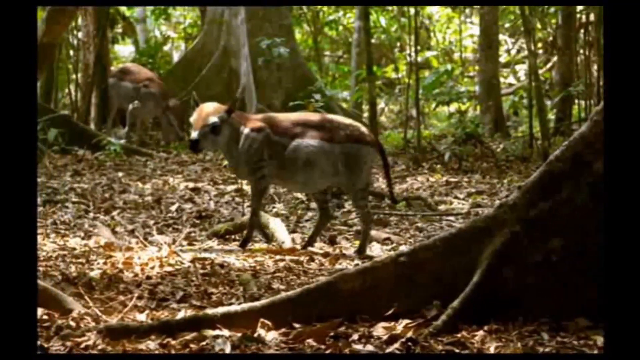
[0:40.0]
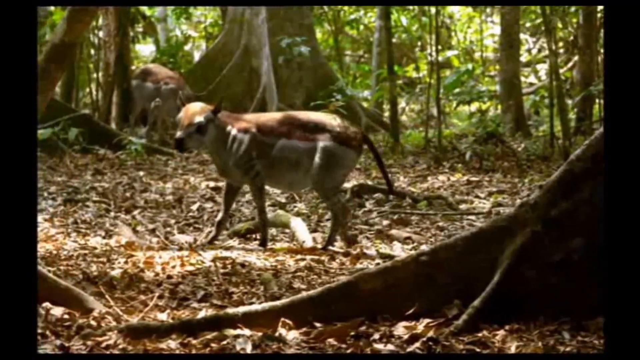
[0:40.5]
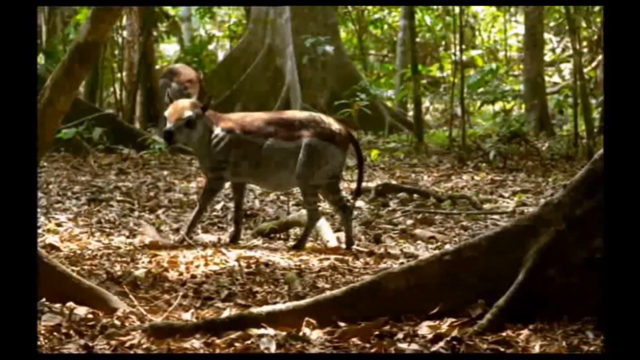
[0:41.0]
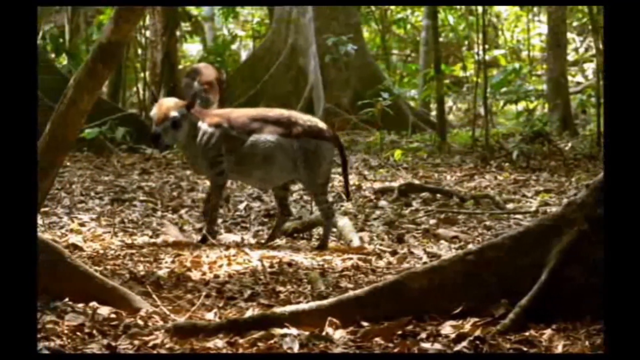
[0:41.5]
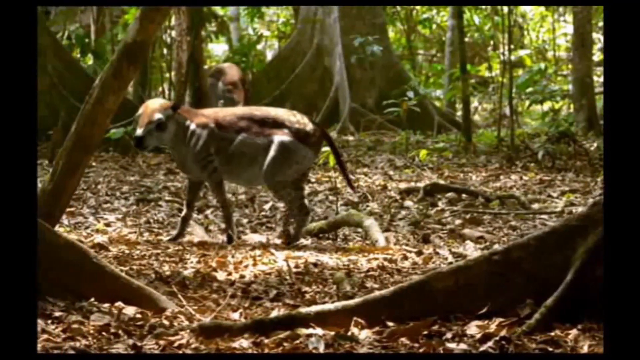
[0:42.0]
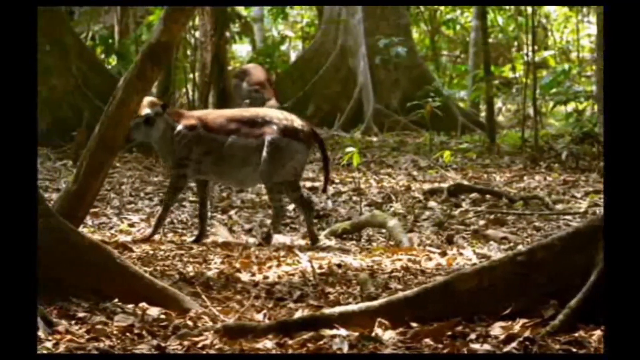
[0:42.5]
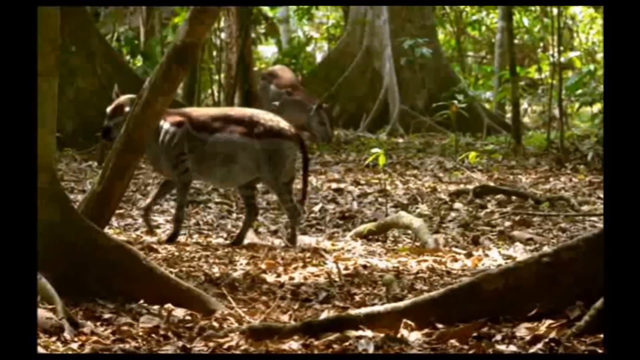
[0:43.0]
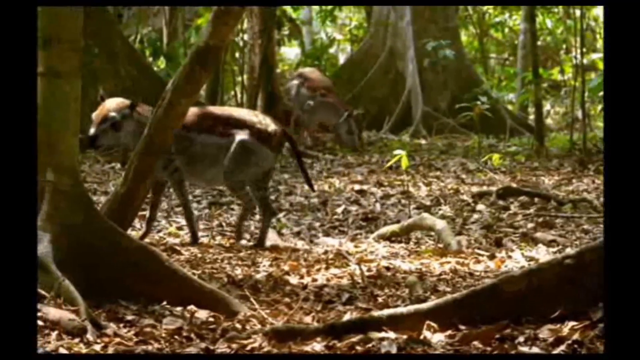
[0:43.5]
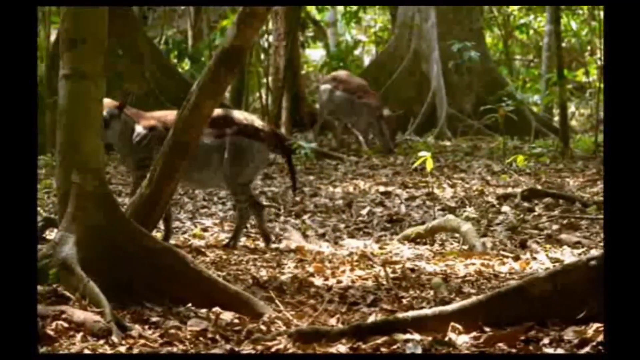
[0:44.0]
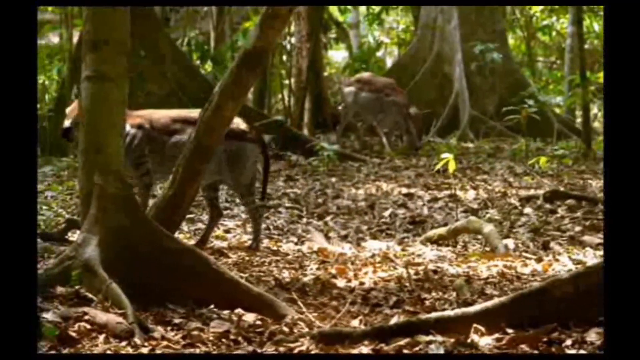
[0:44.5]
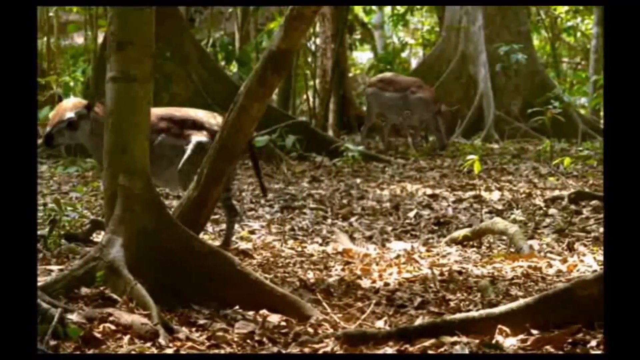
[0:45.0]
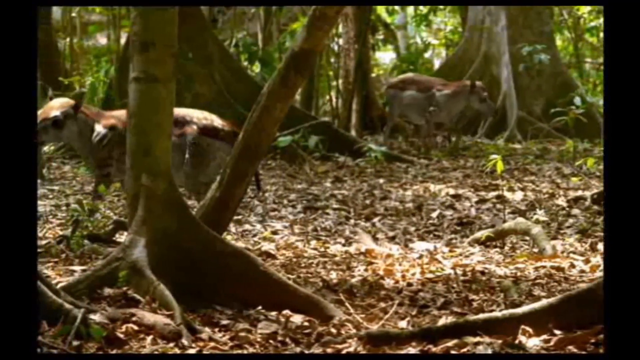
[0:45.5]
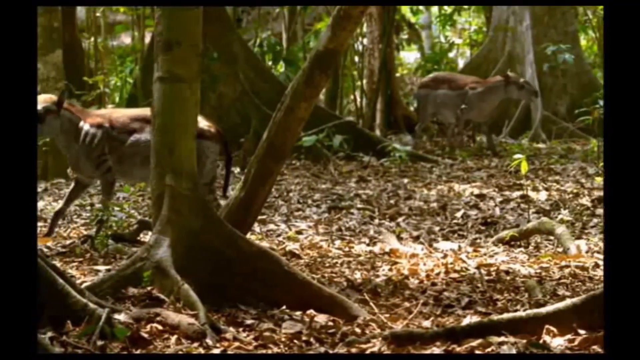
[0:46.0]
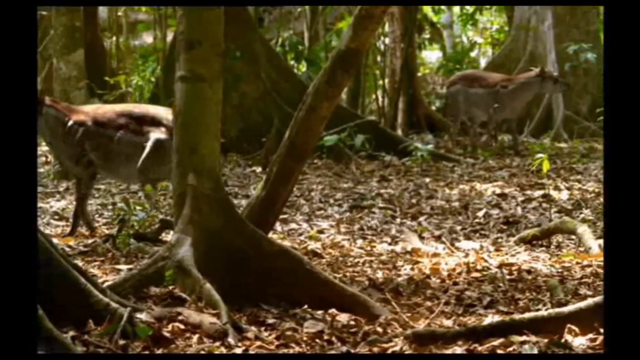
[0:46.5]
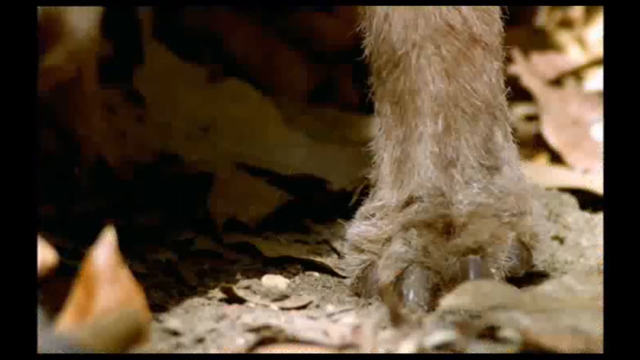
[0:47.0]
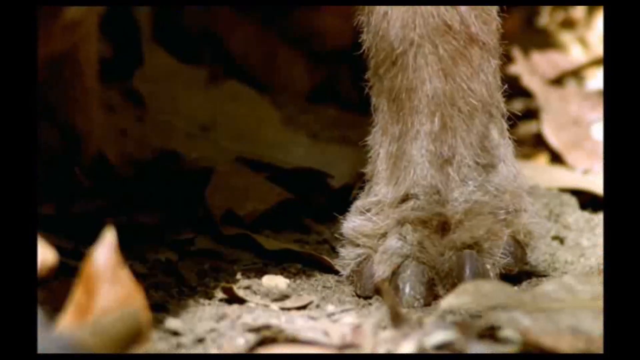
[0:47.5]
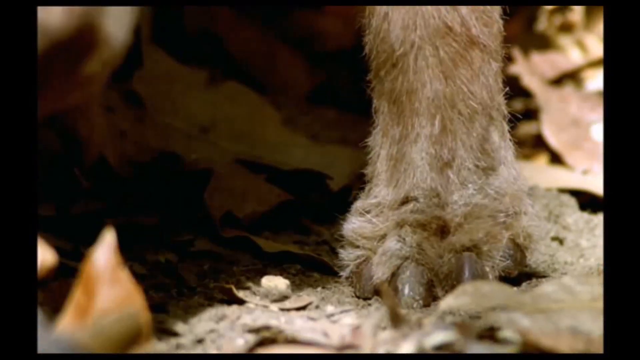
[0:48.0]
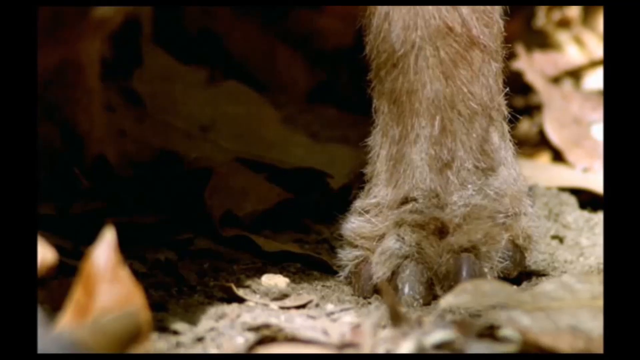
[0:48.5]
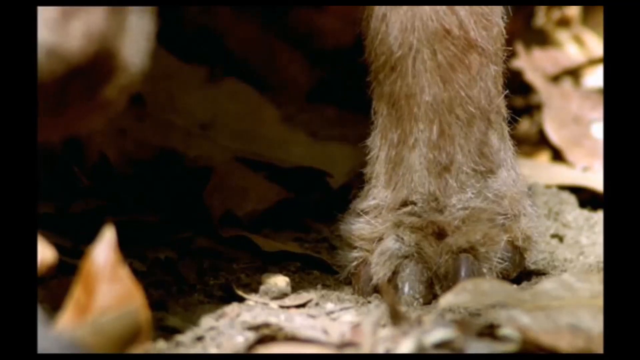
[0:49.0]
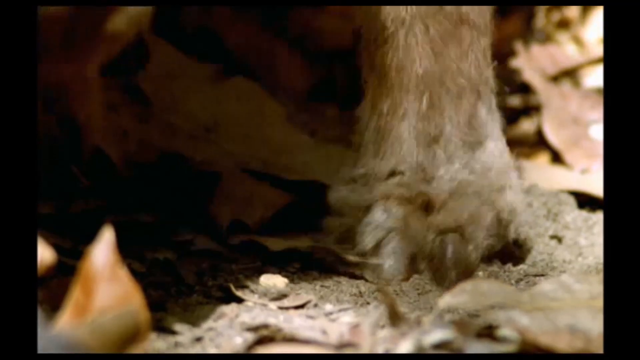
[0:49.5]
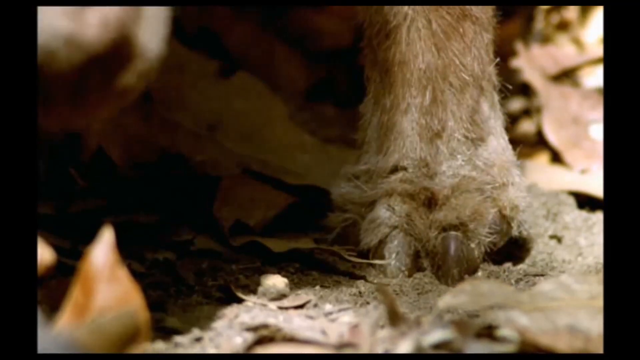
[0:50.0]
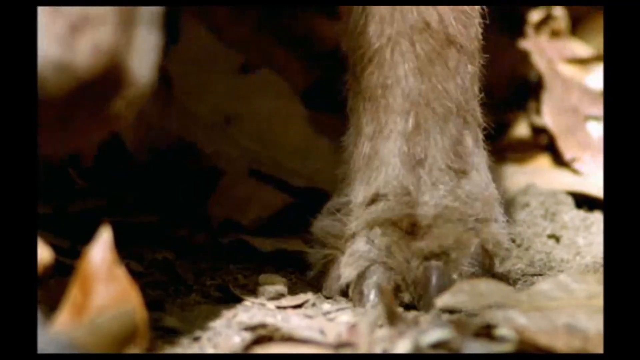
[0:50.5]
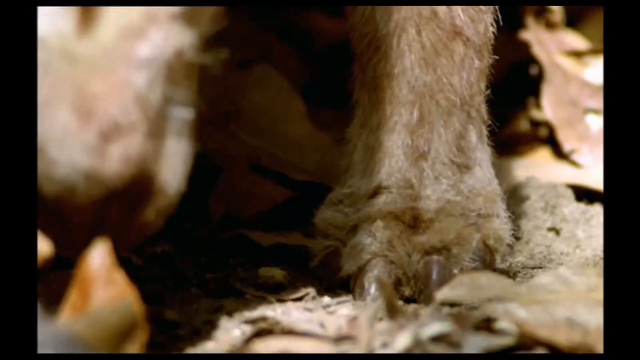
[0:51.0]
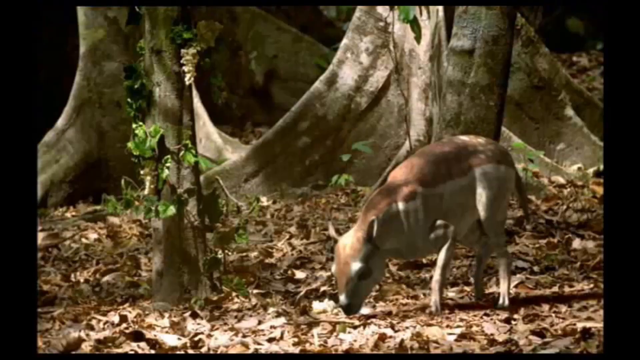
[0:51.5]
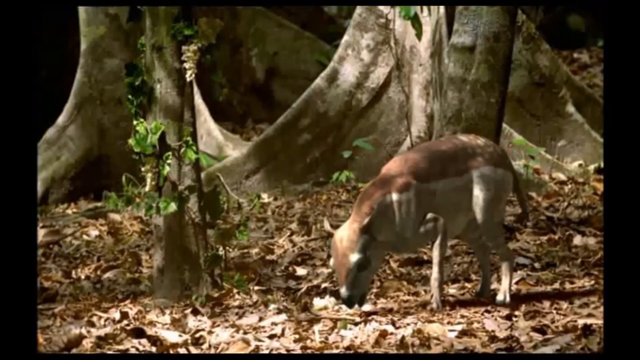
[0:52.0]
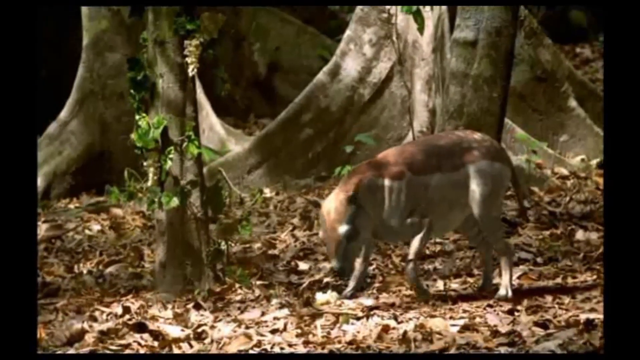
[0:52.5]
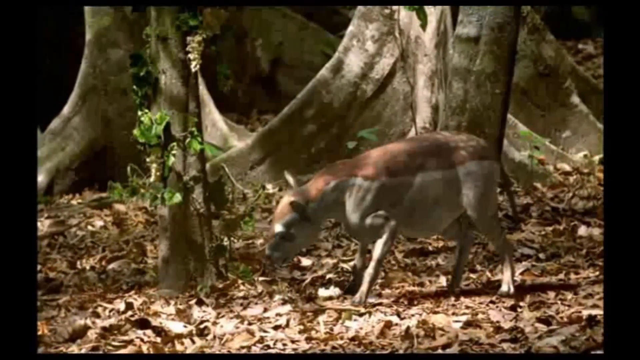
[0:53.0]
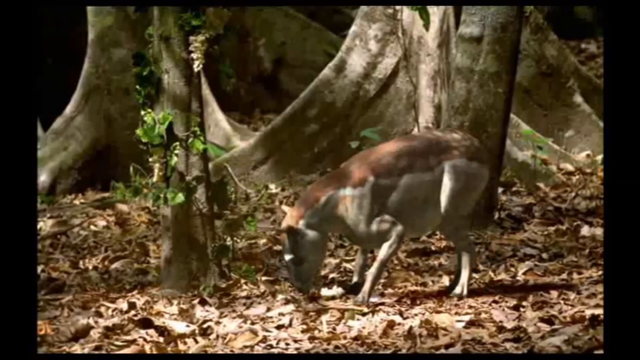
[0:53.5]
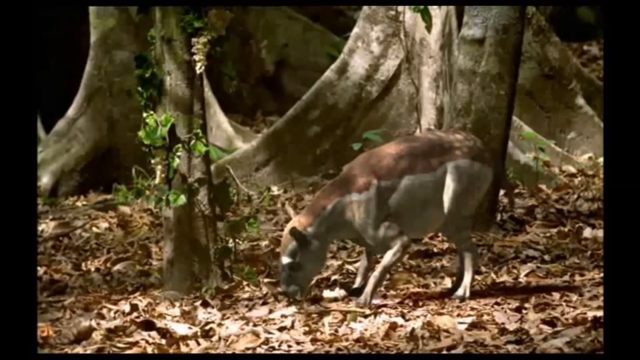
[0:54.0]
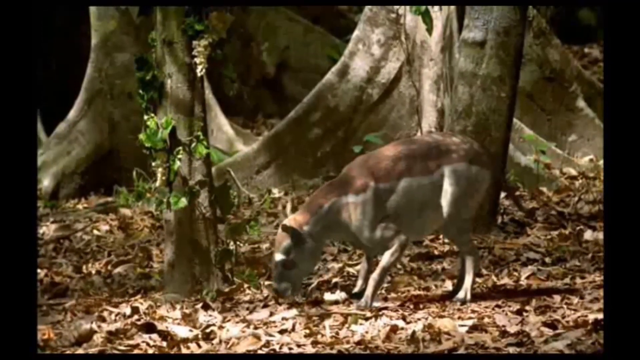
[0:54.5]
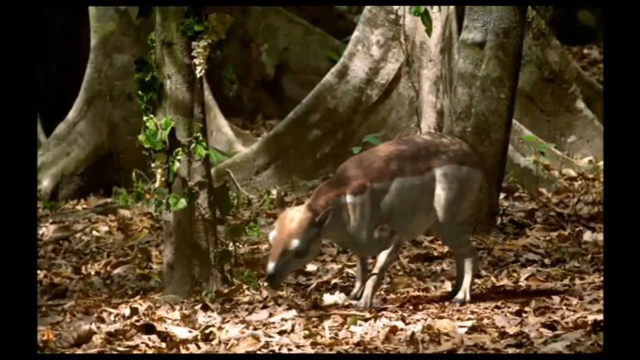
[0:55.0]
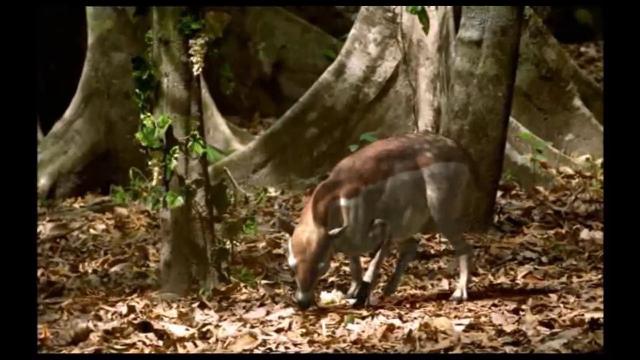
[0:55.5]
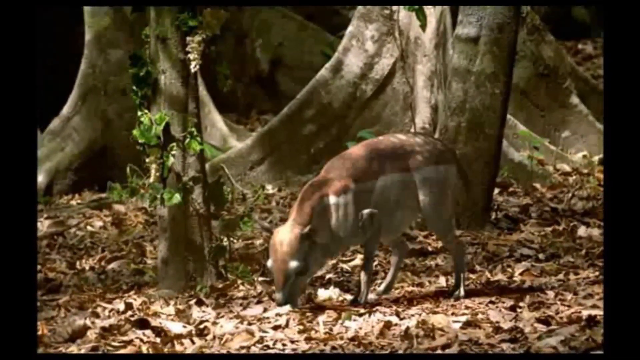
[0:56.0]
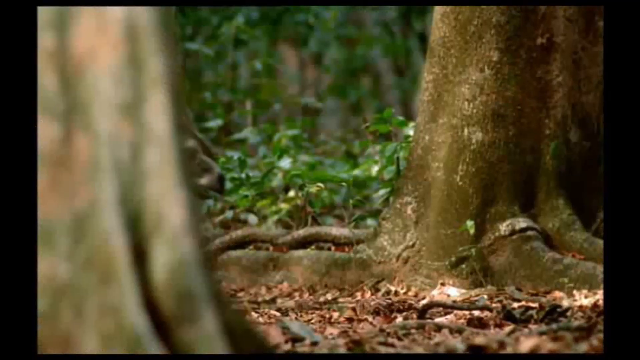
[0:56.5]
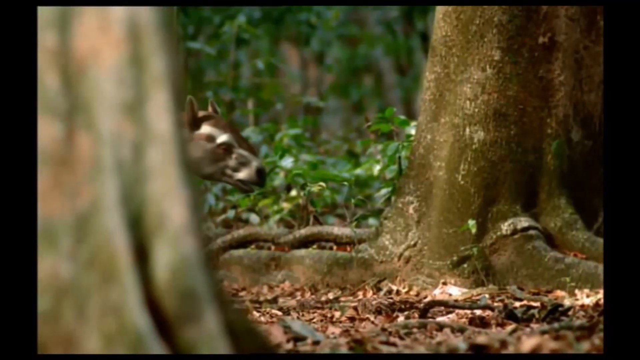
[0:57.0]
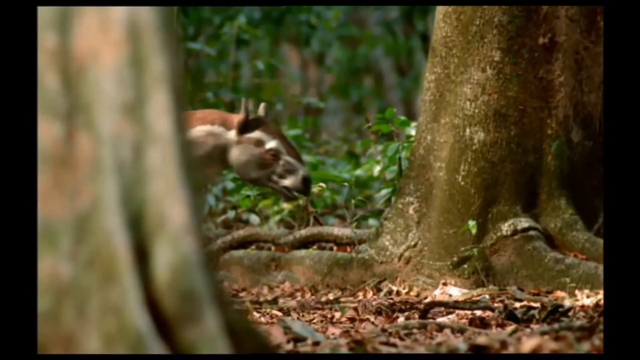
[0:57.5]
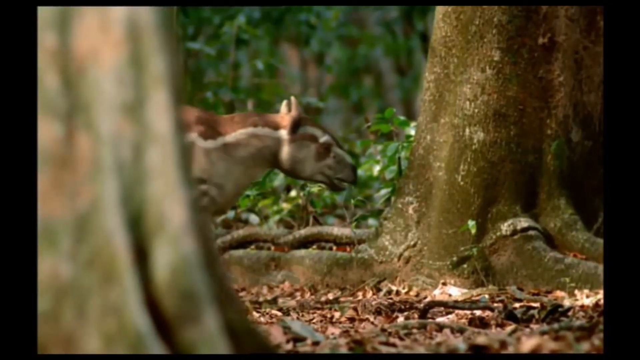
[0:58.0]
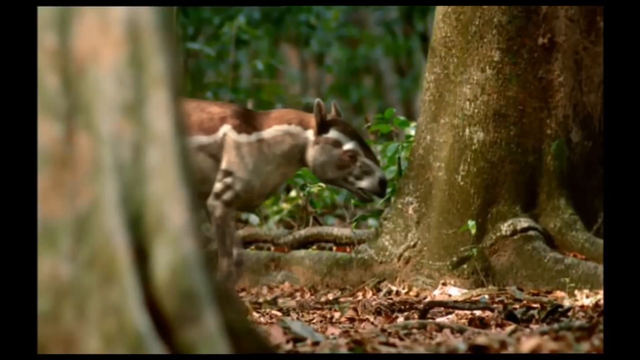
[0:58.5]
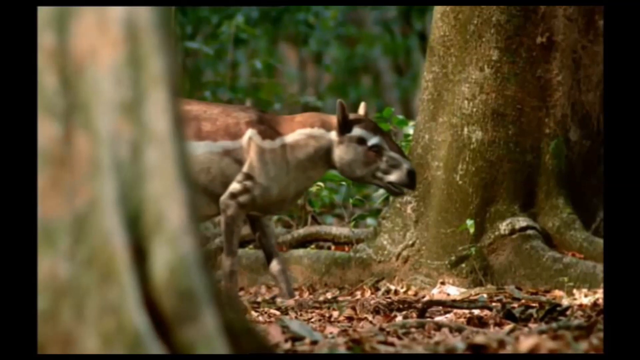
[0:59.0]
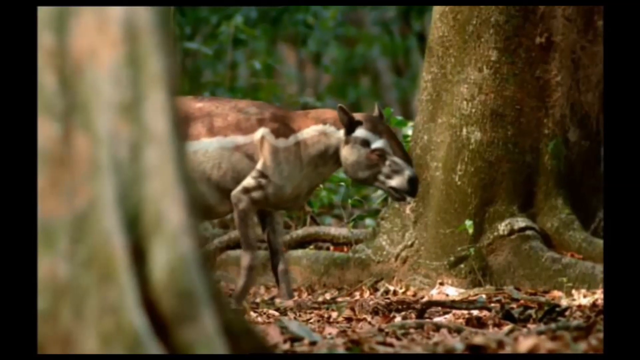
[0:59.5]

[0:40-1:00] A strange-looking animal is shown, with another animal of the same kind behind it grazing or foraging on the ground. The animal's paw is shown standing directly on the ground, which is surrounded by leaves all around. The animal seems to be jerking forward in a natural movement. Behind this animal there are two bucks, and another buck seems to be appearing from the left side of the screen. They are surrounded by trees that look like they are webbed. Green plants surround this area, which looks like a canopy where many animals pass by. The ground is filled with dried leaves, giving it a brown color.